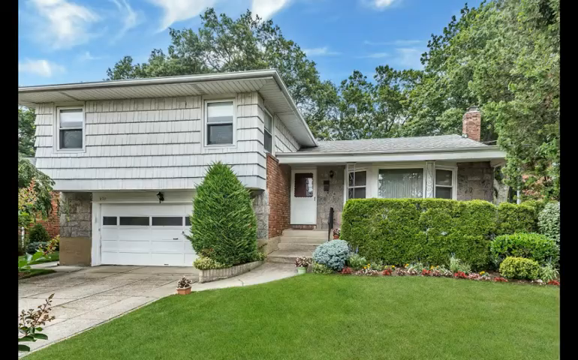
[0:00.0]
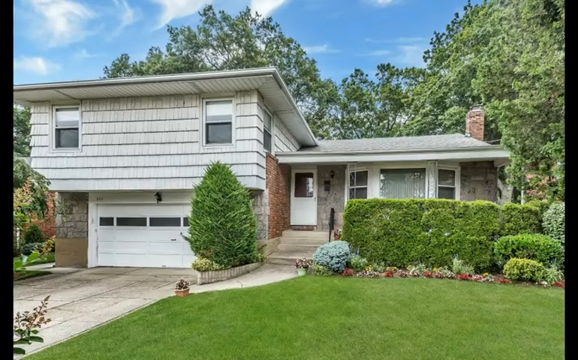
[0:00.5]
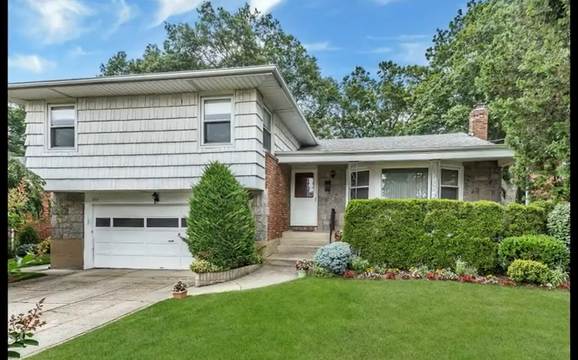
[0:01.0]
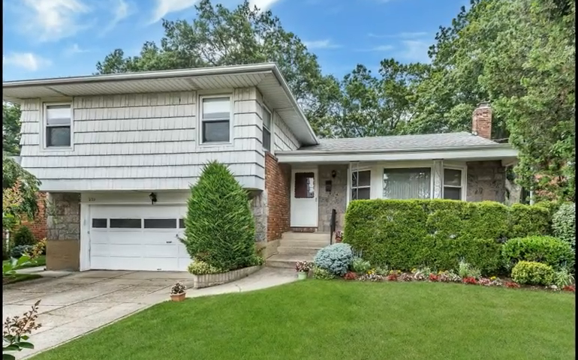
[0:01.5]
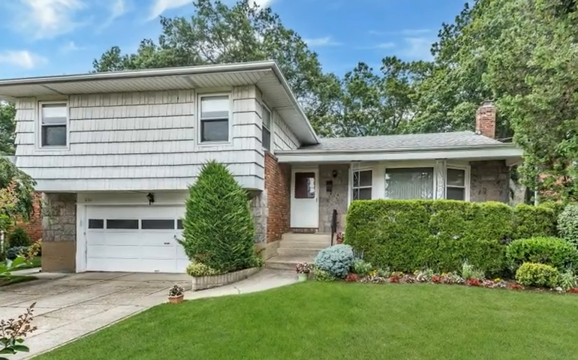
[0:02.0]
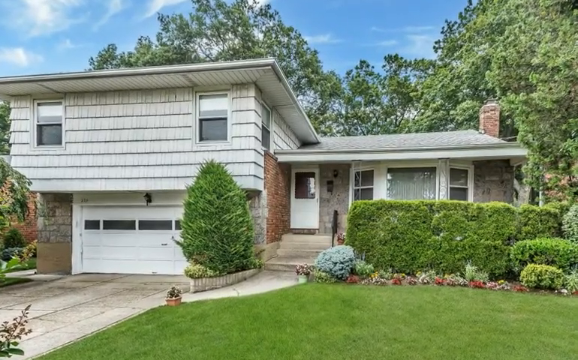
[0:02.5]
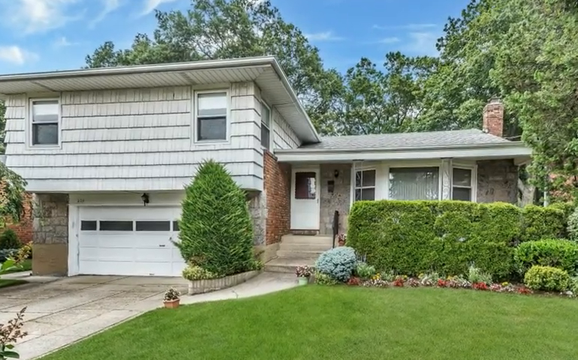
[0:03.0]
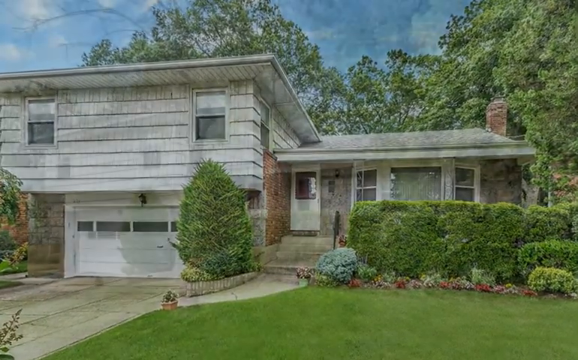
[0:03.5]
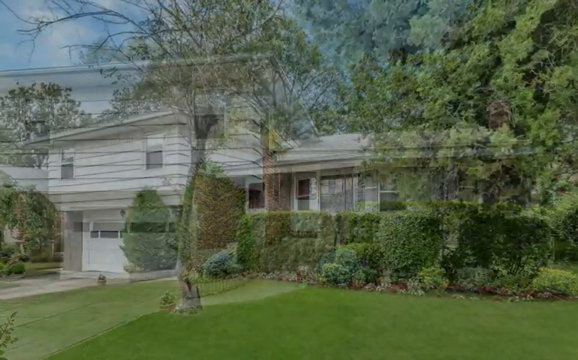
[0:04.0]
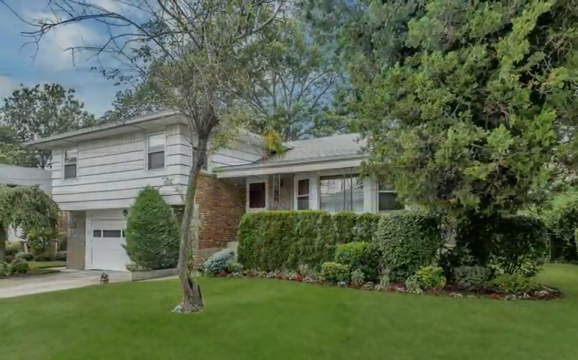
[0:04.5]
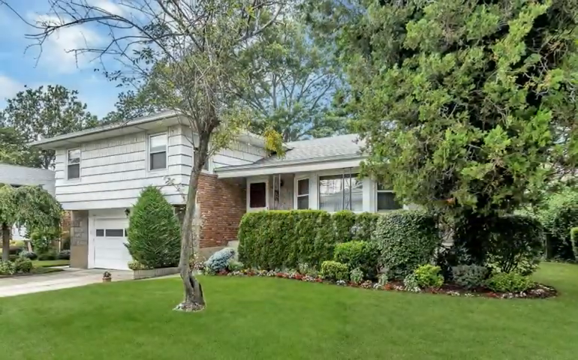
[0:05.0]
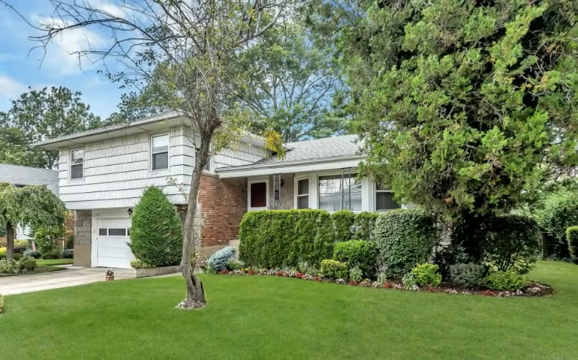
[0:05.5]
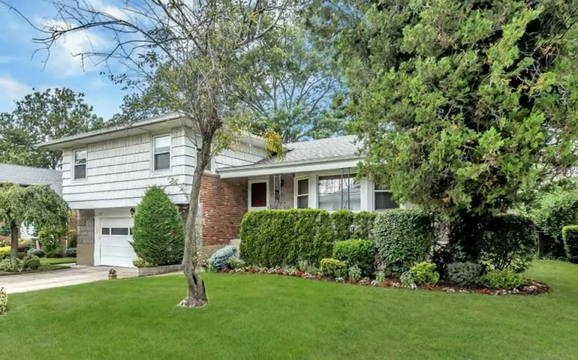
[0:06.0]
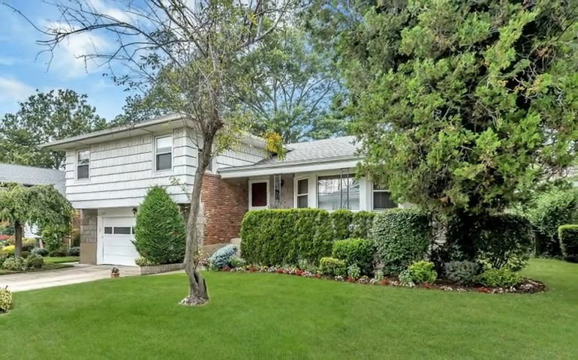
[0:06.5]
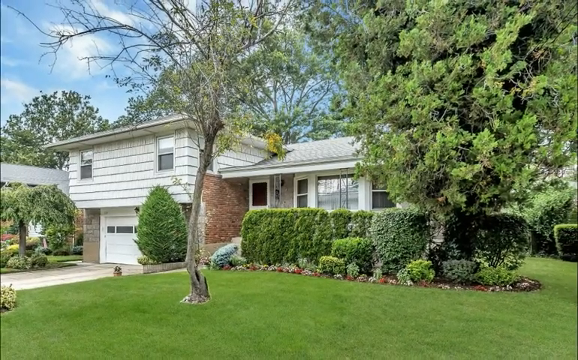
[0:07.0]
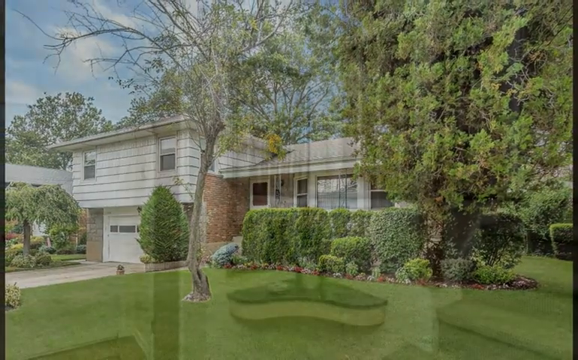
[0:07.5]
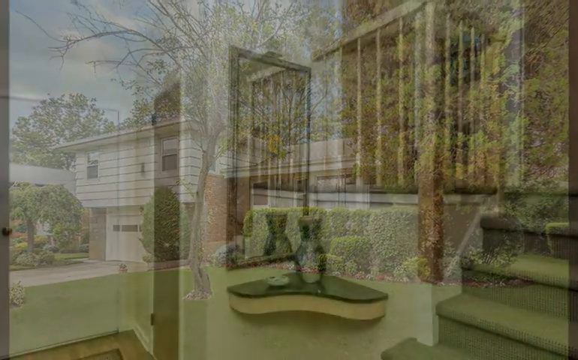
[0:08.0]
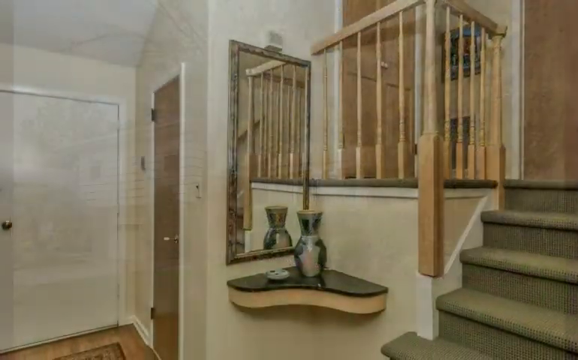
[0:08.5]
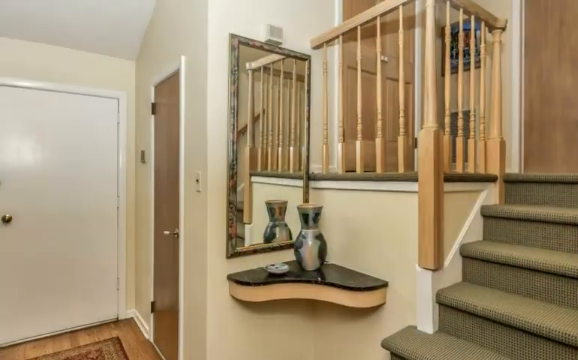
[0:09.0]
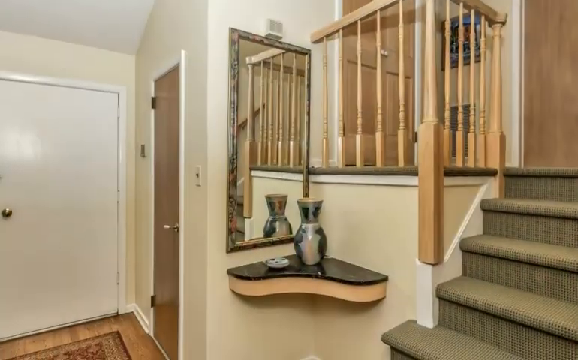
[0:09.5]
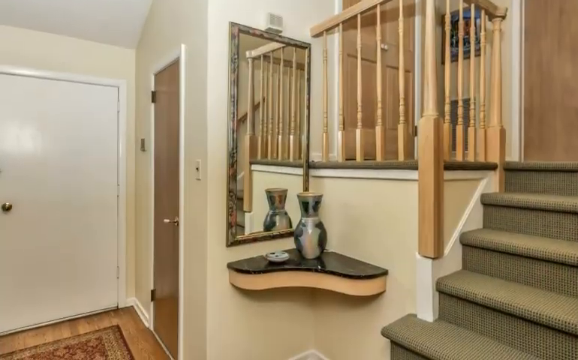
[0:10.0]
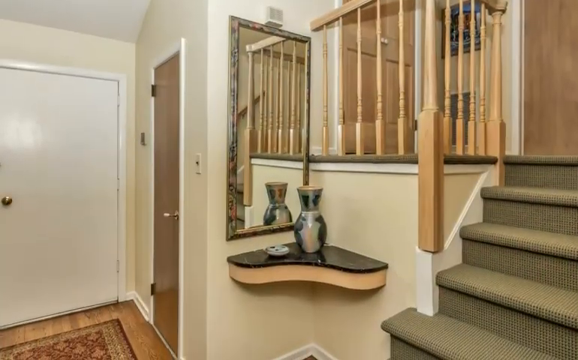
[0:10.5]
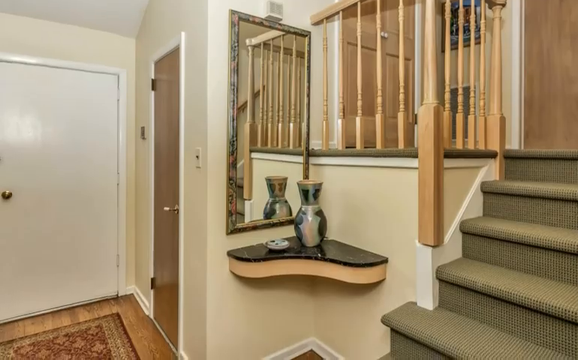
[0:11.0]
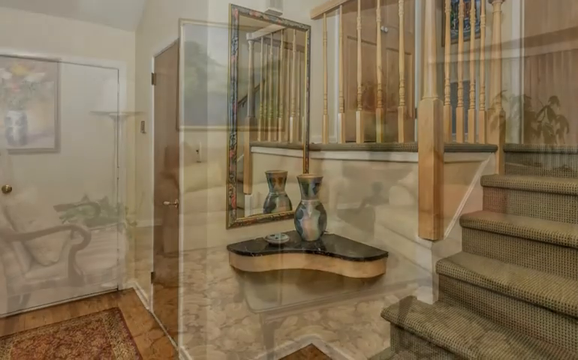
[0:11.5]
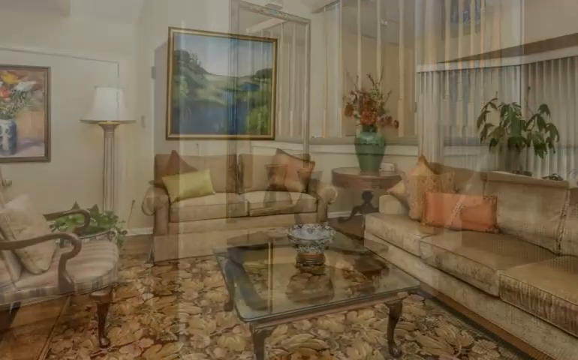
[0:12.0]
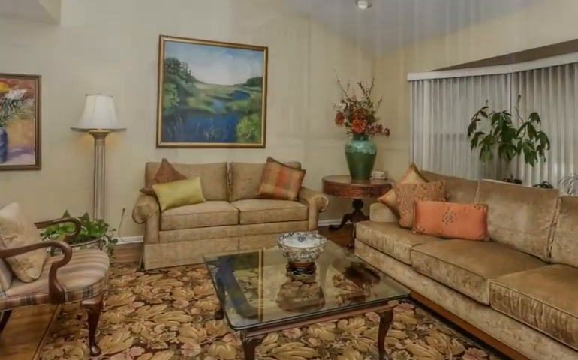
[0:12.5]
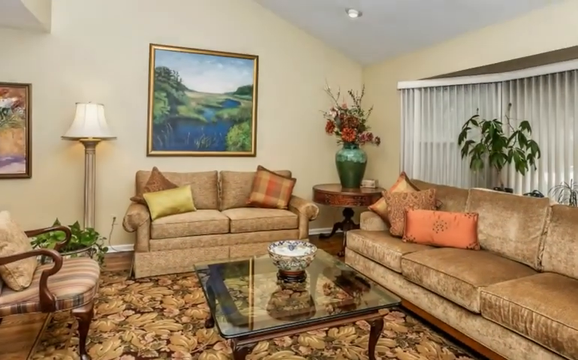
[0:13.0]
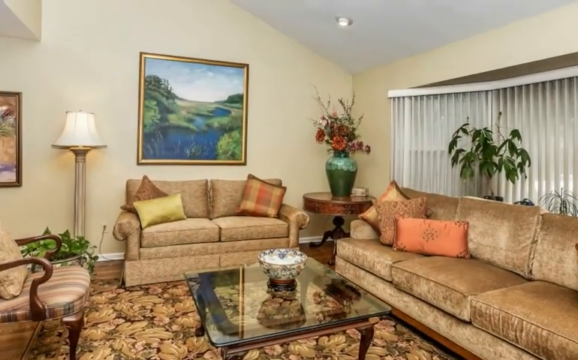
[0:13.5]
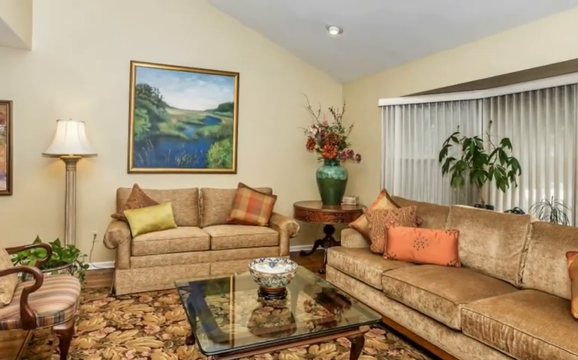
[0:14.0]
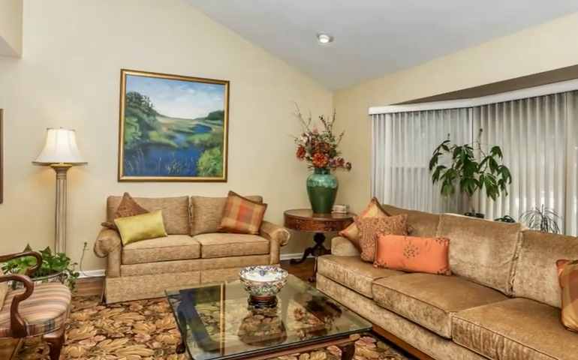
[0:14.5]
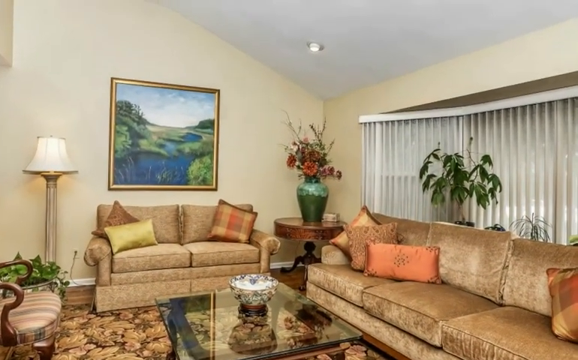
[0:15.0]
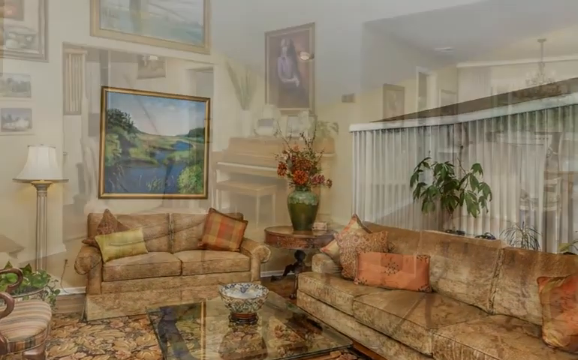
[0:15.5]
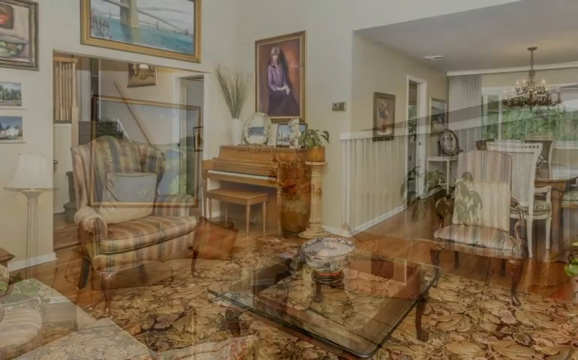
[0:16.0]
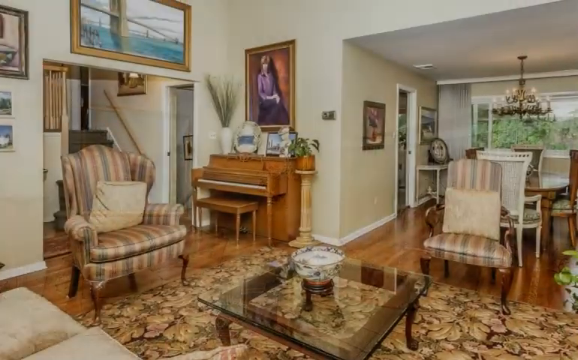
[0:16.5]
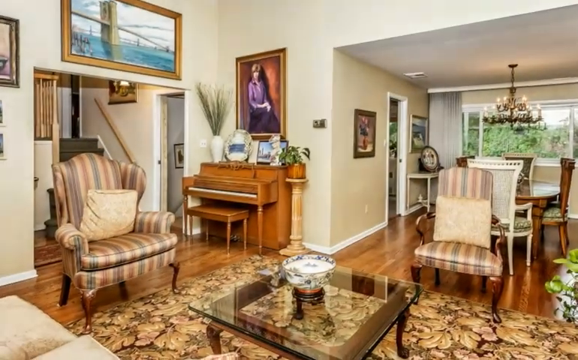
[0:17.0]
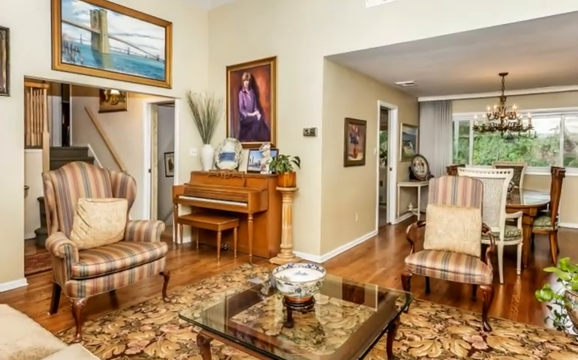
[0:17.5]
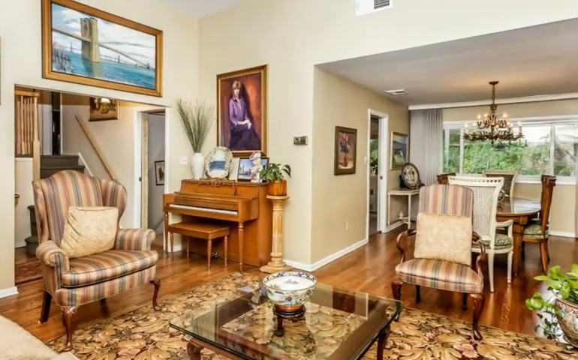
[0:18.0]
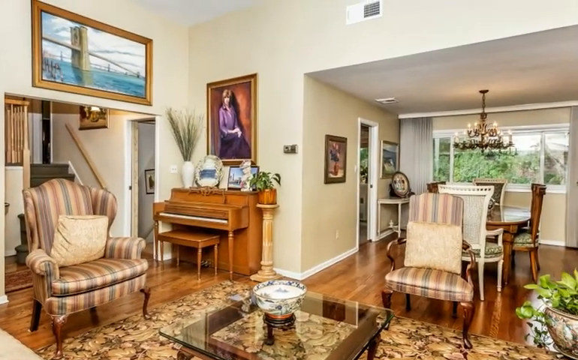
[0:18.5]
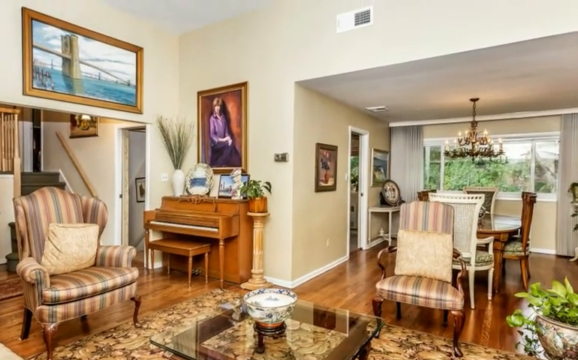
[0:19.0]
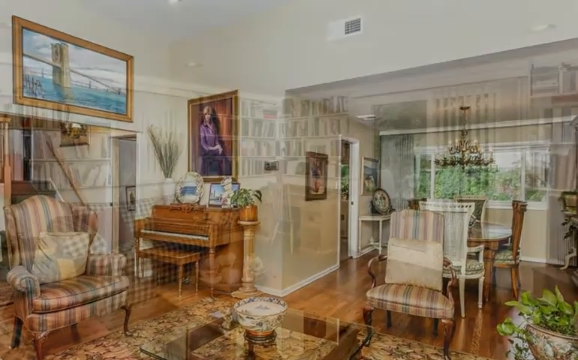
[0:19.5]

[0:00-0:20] The exterior of what is presented as an average middle-class family home is shown. The home is made of brick in gray, charcoal, terracotta, white, and brown, and it has a gray roof with a chimney on top. A stairway of four steps leads up to the front door. The home has a two-car garage with a white garage door that has at least four rectangular windows, and there is a light over the garage door. The exterior is painted light gray. The front door is white, with a rectangular glass cutout so the family can see out. Many large, mature green trees surround the home. The interior matches the exterior, decorated in neutral monotone colors.